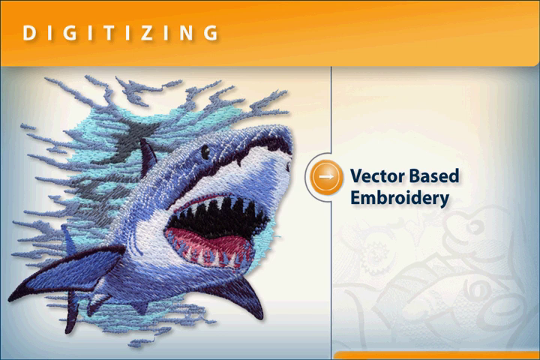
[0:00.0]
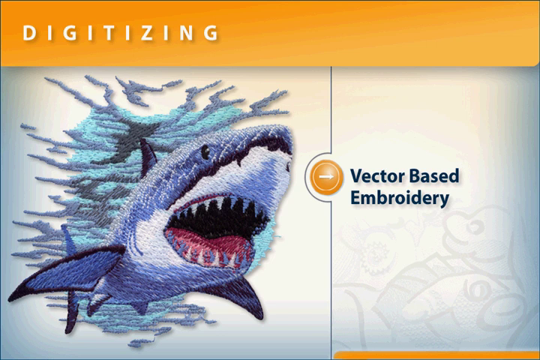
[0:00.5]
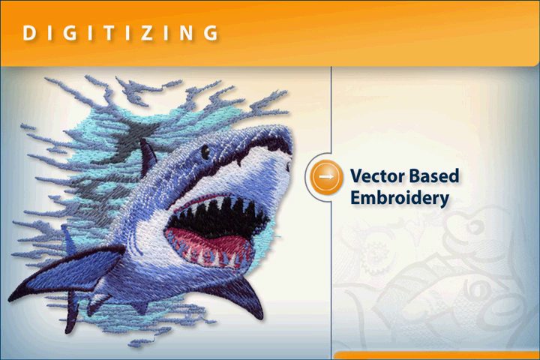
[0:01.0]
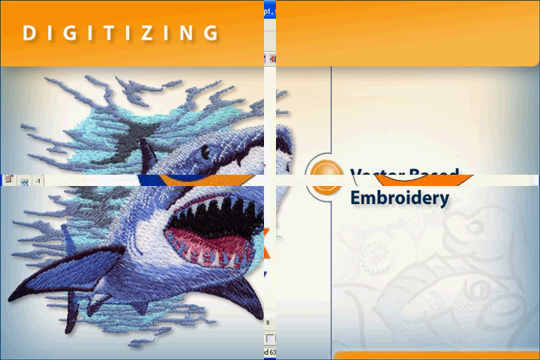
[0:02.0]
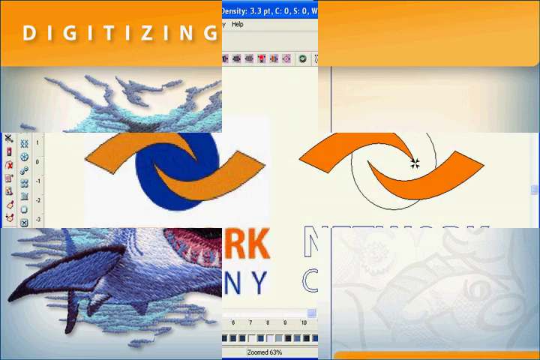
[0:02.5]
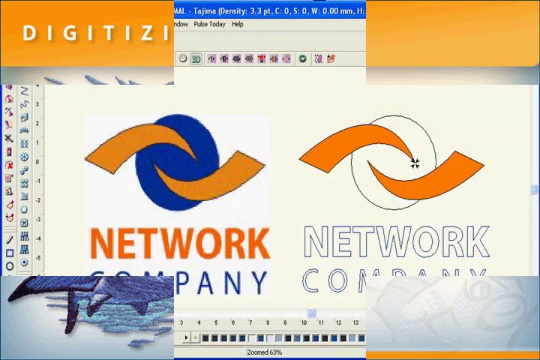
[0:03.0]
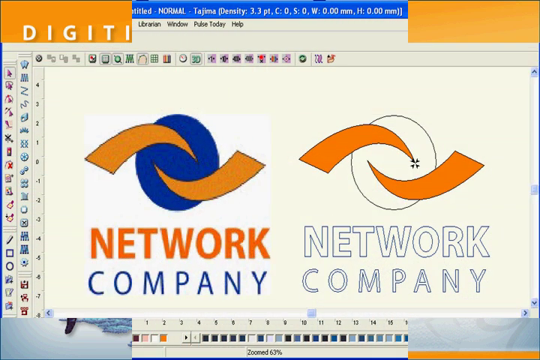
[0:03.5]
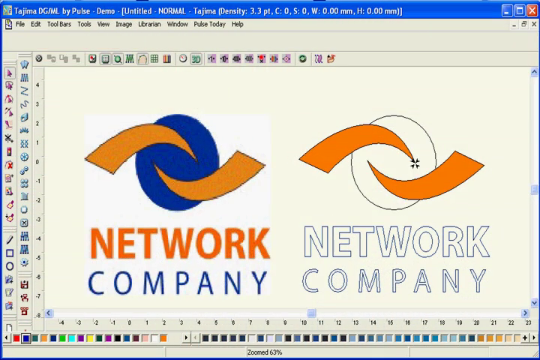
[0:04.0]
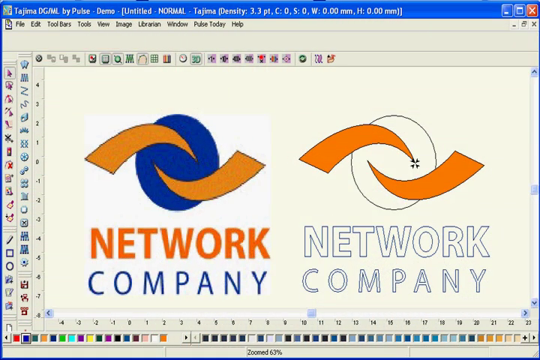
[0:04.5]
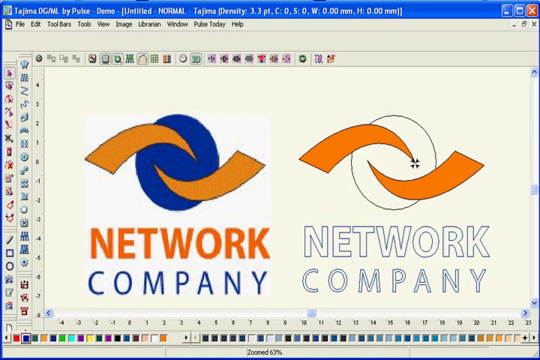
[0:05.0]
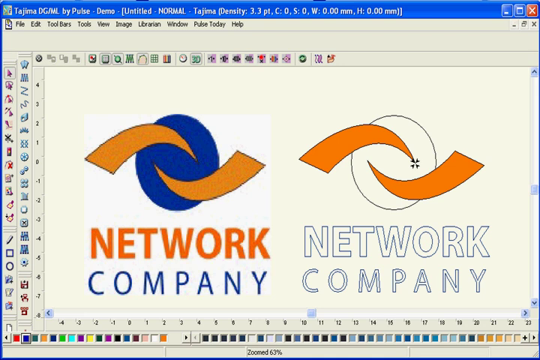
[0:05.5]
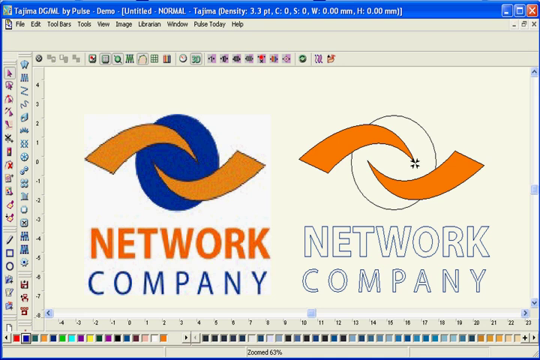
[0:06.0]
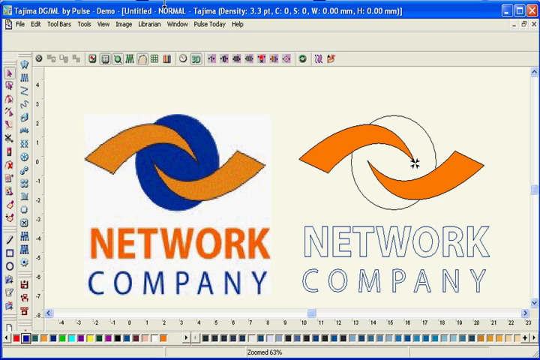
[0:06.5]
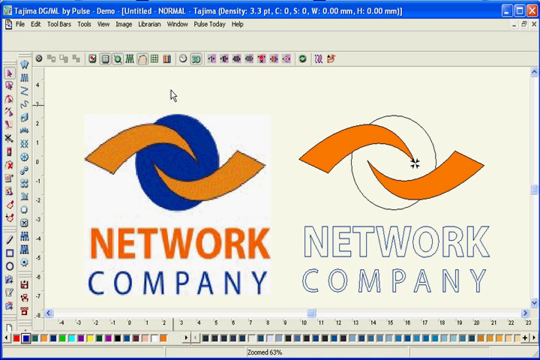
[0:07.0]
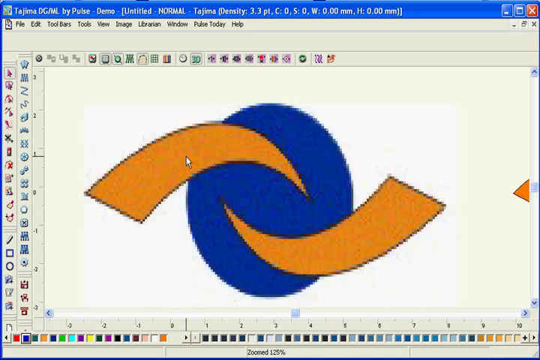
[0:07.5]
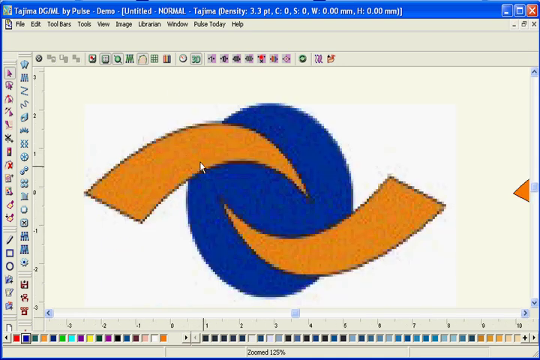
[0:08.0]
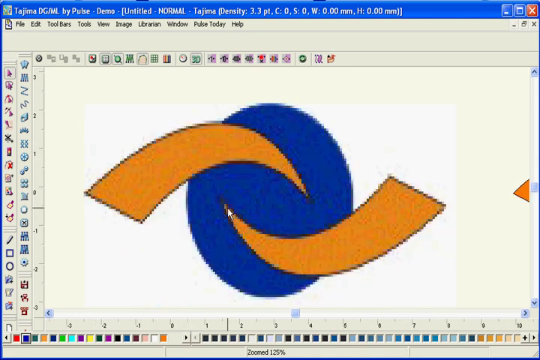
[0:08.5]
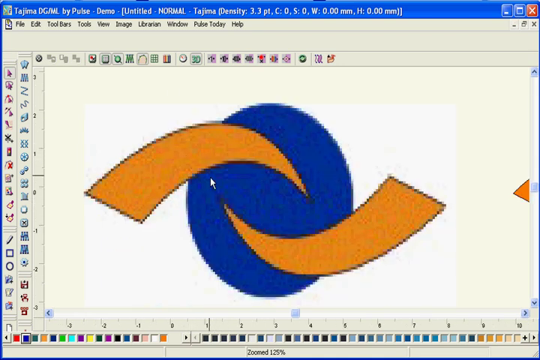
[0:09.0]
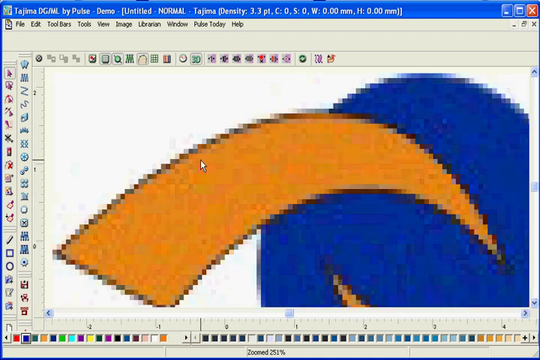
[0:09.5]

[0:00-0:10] At the top of the screen is an orange background with white lettering reading "digitizing". Underneath it, on the right side in the middle of the screen, is "vector-based embroidery". To the left of that is an embroidered shark in gray, blue, white and black. Its mouth is open, showing its teeth and red on the inside of the mouth. In the background, the waves of the sea can be made out.